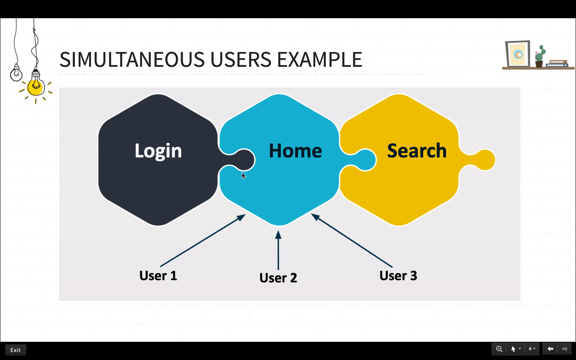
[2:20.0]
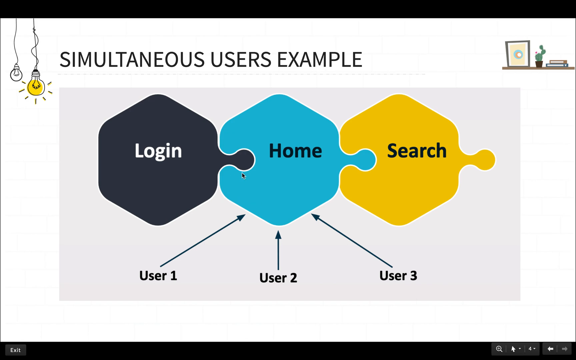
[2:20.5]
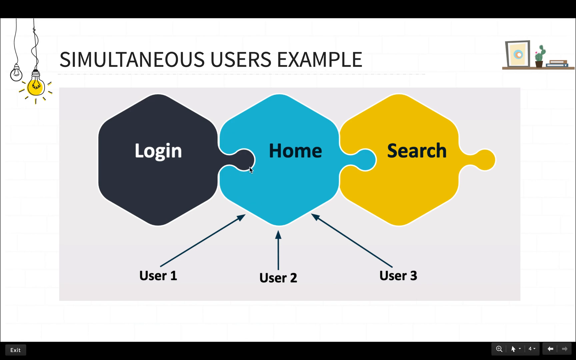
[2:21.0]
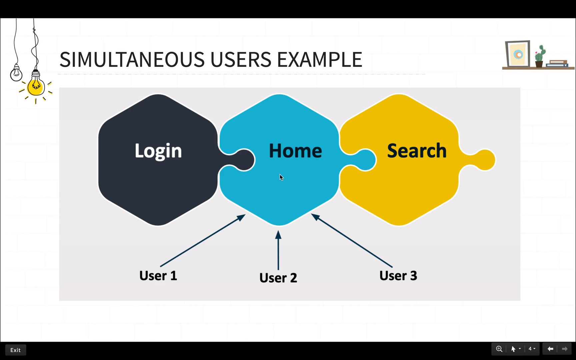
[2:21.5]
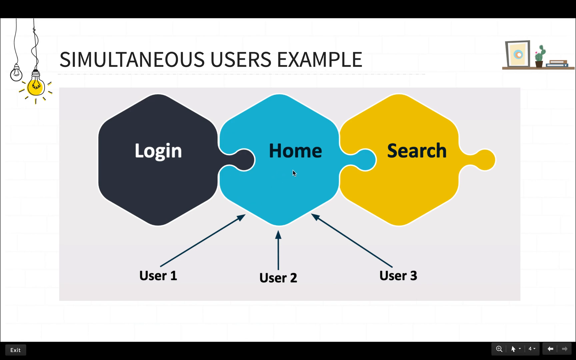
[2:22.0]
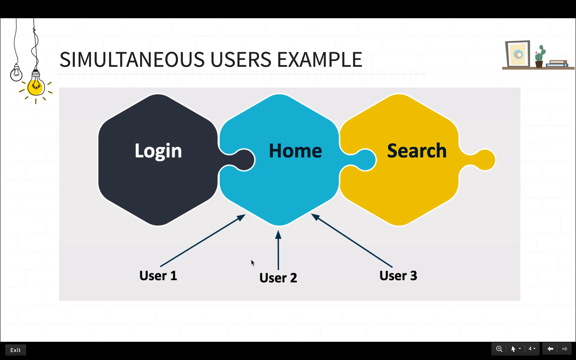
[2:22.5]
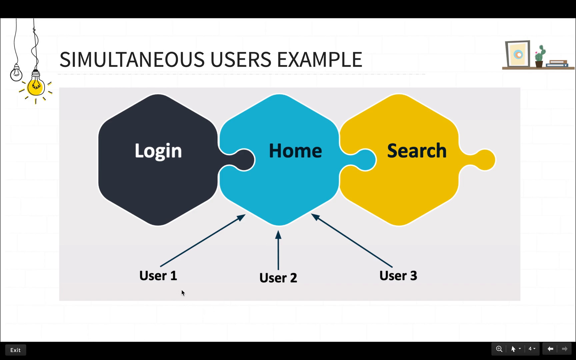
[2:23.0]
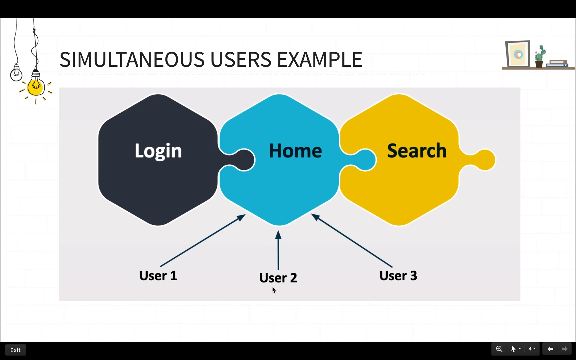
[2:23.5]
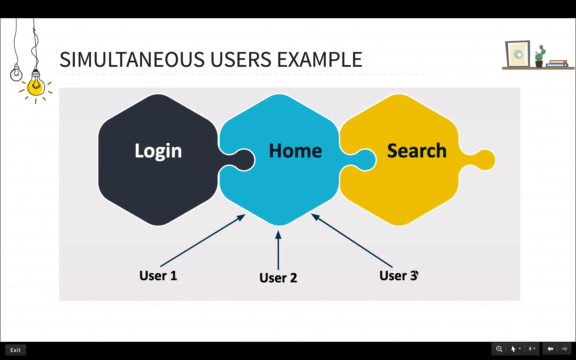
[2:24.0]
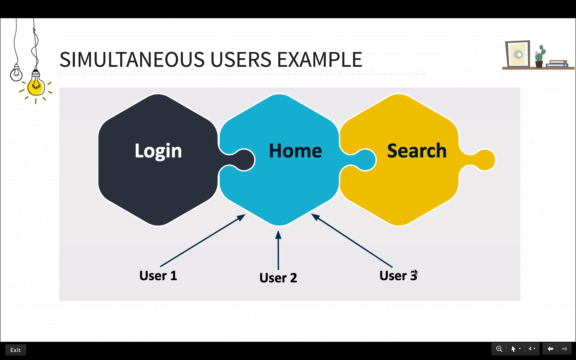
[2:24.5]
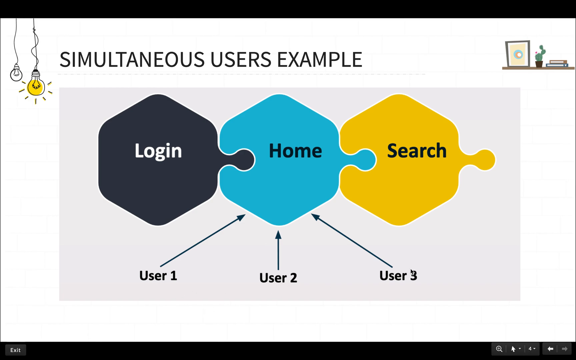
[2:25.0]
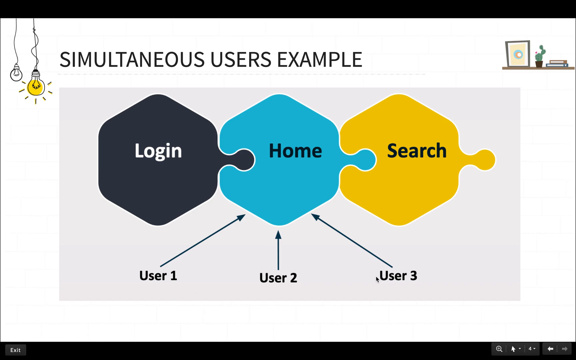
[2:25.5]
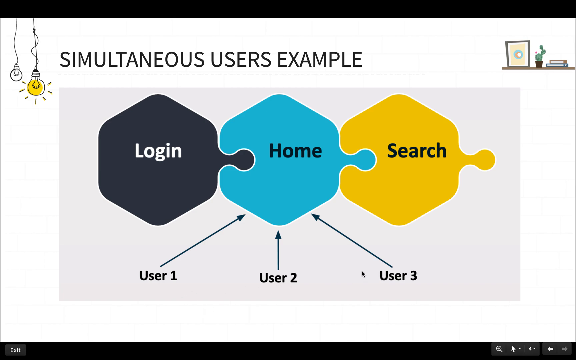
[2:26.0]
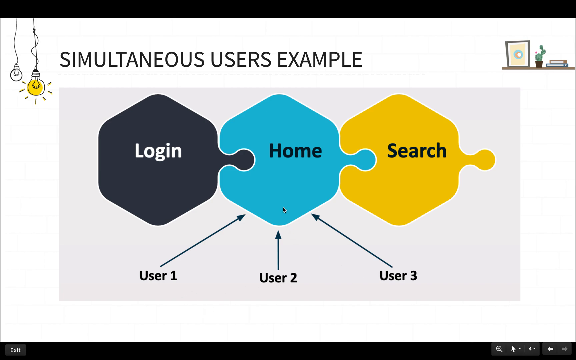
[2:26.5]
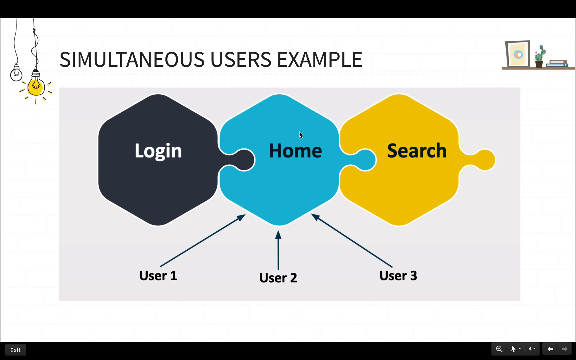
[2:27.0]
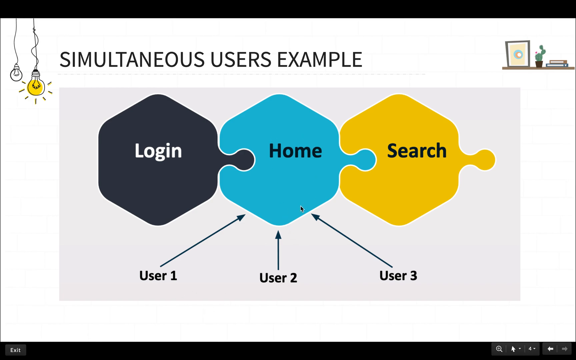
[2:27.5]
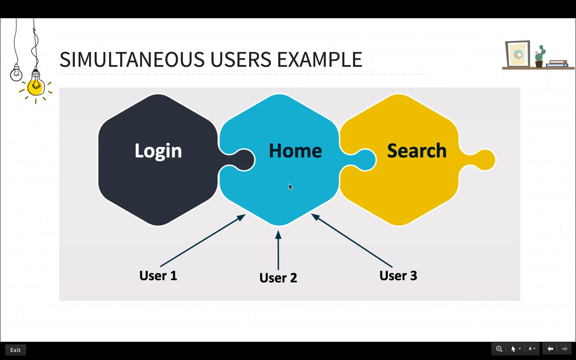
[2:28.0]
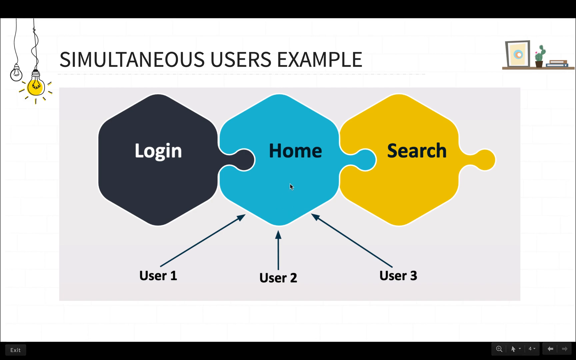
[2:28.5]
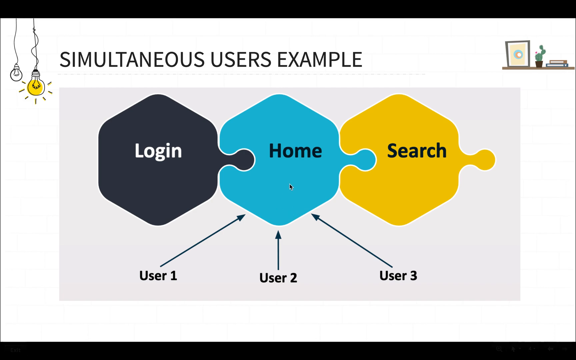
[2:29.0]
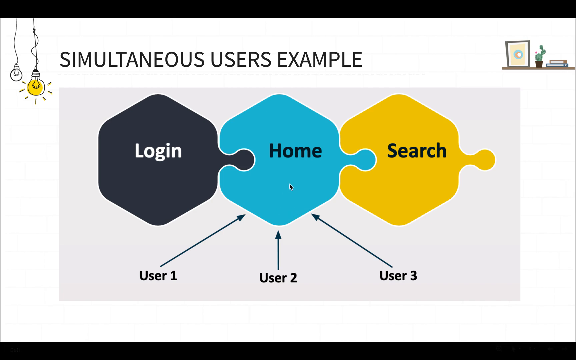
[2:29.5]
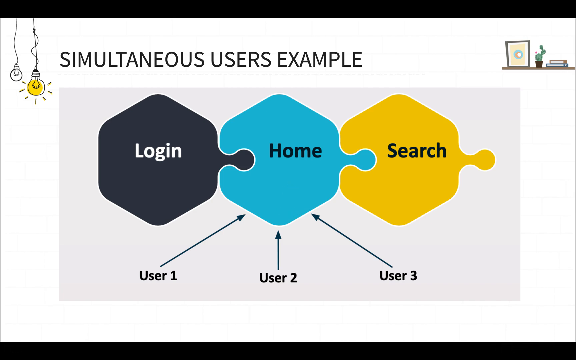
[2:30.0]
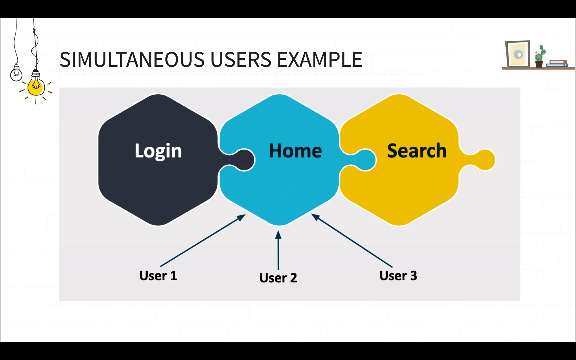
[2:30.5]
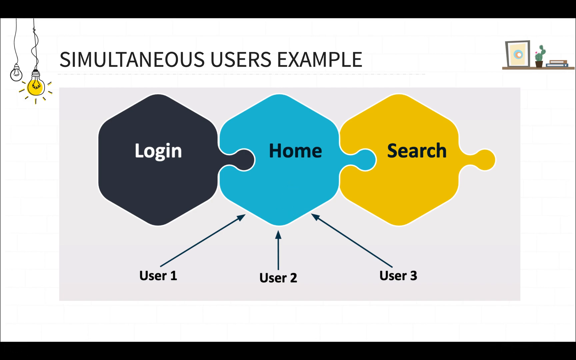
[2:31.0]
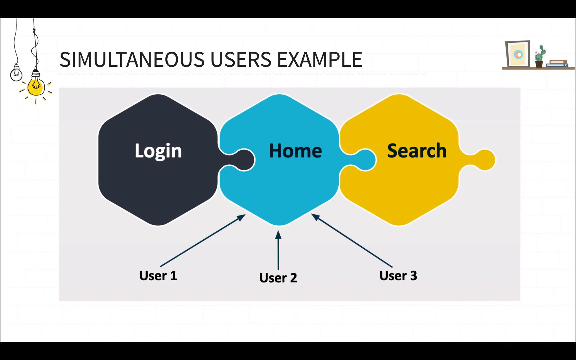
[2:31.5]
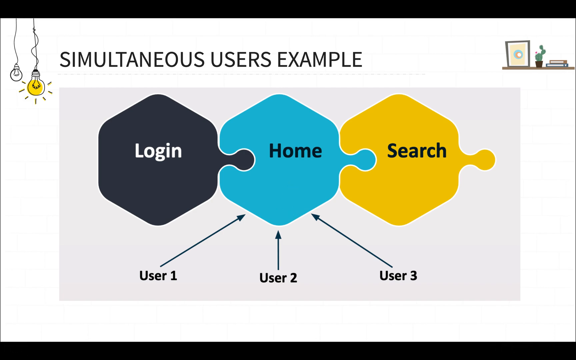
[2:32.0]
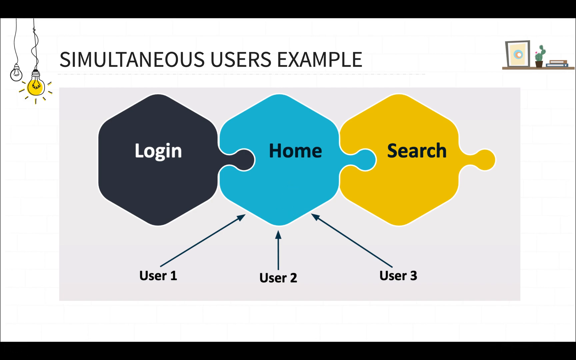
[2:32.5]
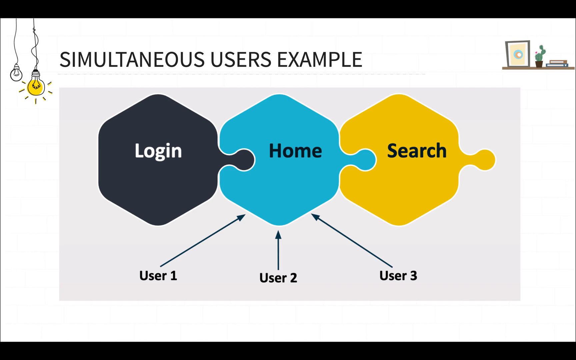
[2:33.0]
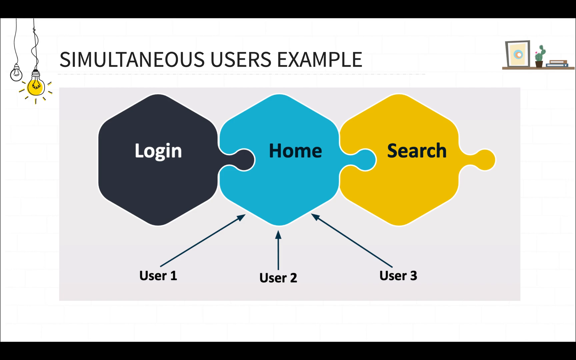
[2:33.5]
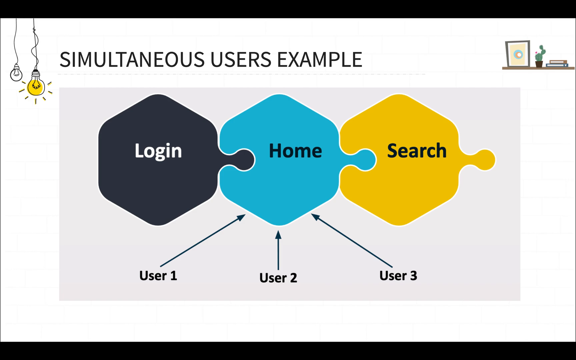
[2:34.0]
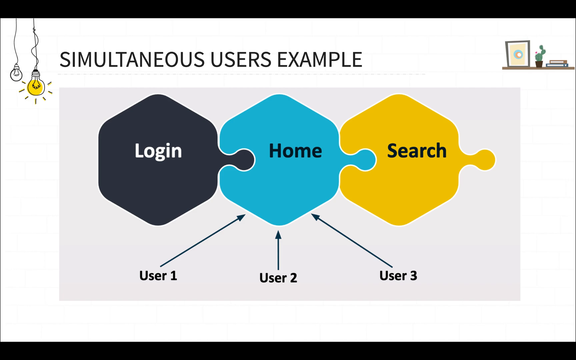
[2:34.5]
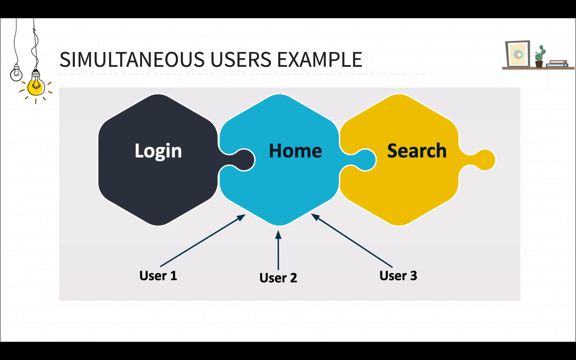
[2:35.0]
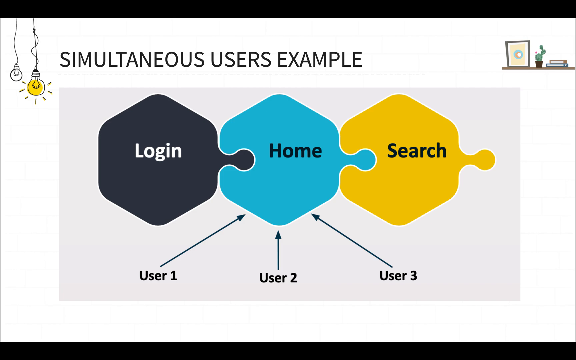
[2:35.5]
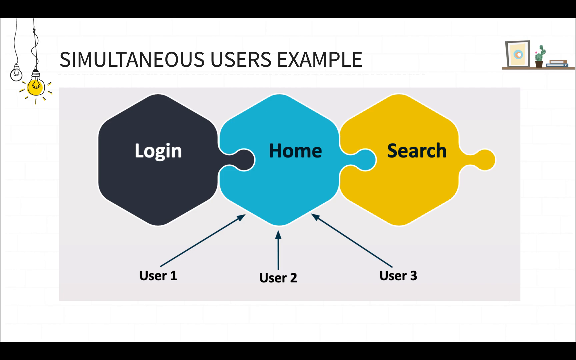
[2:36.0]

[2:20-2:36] Puzzle pieces show user 1, user 2 and user 3 all on the home part of the website at the same time, instead of in three different spots such as login, home and search. Each slide has a white background with a black border on the top and bottom. There tends to be a clock in the right-hand corner with a light yellow face and no numbers, and a light bulb dangling down on the left-hand side. Sometimes, when two sides such as concurrent users and simultaneous users are divided, a vine hangs down between them. Both the concurrent users and simultaneous users slides have the puzzle pieces, pointing to different ones.